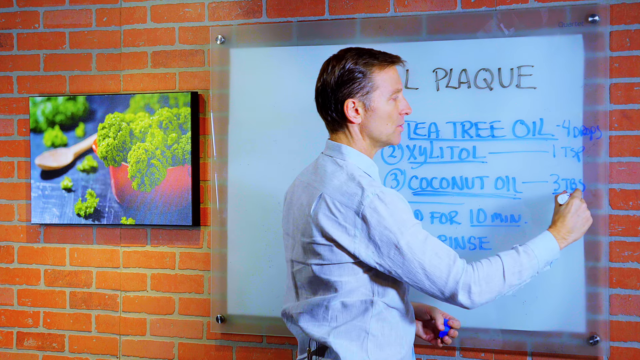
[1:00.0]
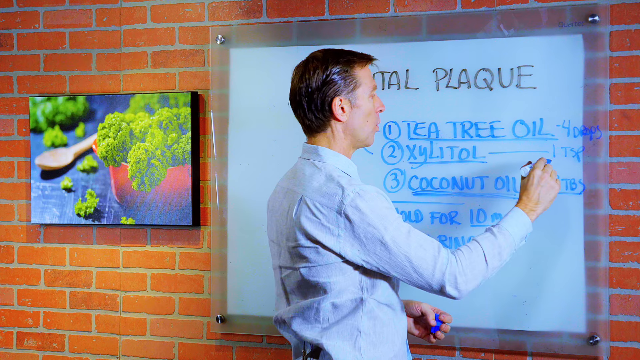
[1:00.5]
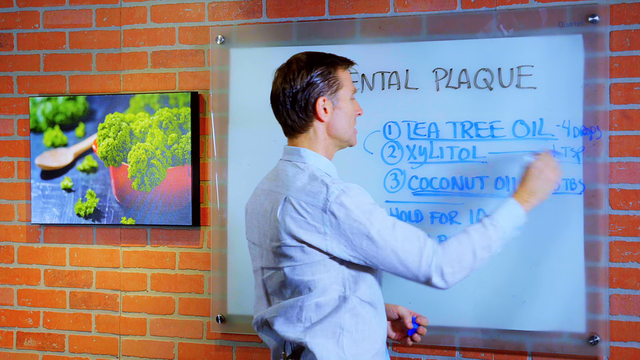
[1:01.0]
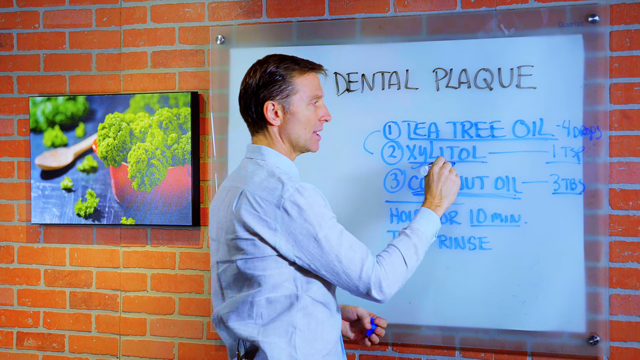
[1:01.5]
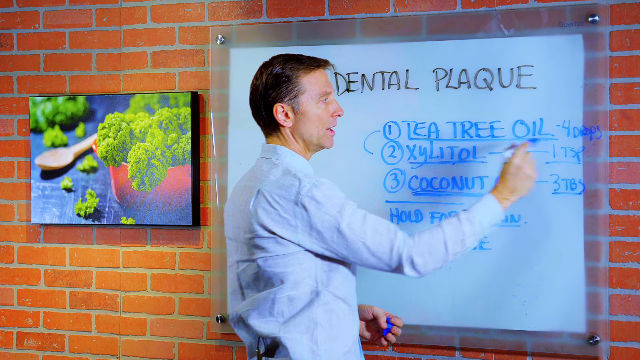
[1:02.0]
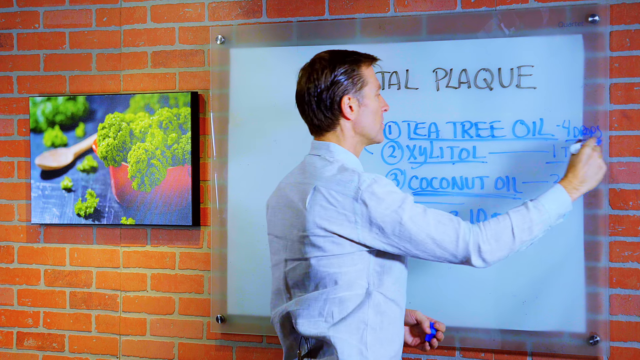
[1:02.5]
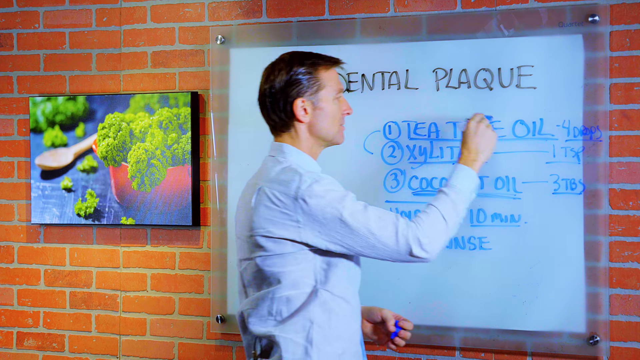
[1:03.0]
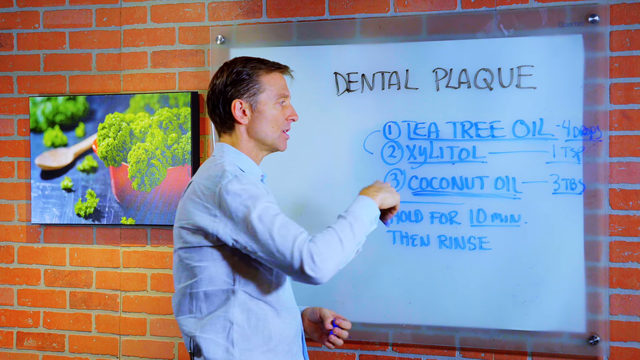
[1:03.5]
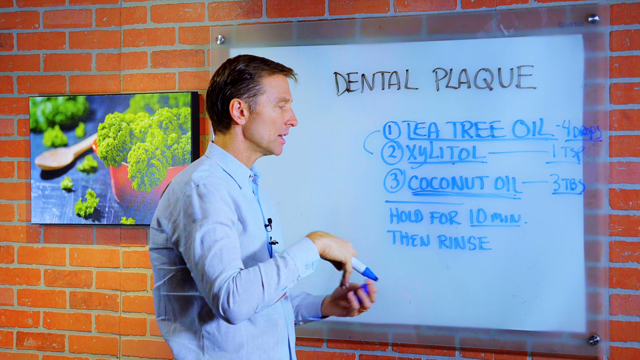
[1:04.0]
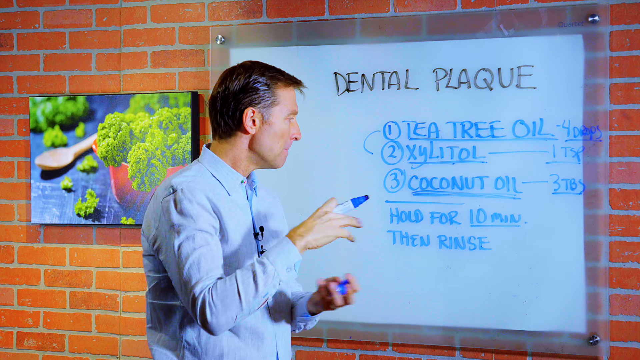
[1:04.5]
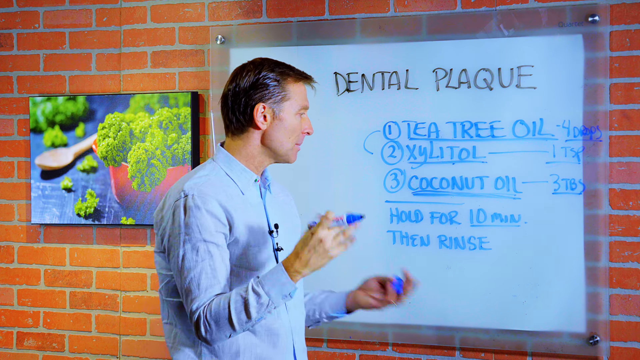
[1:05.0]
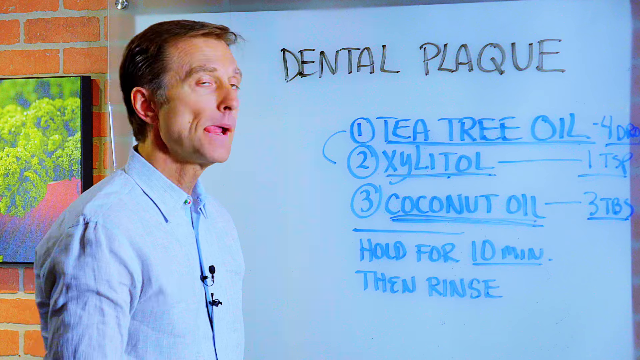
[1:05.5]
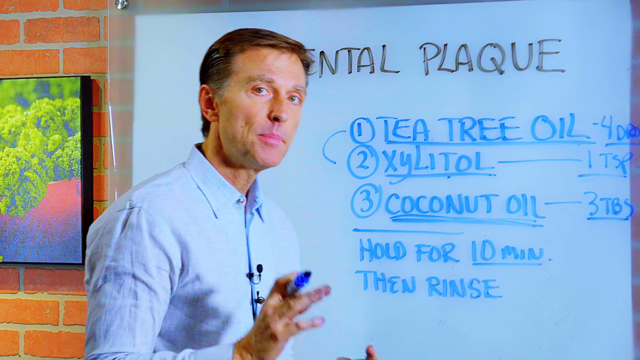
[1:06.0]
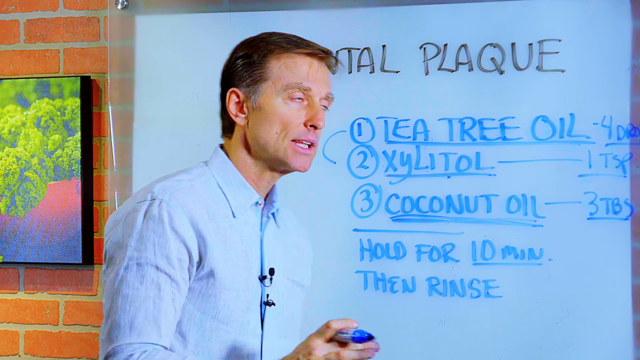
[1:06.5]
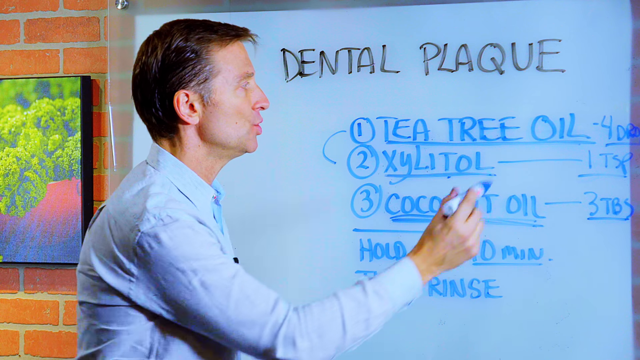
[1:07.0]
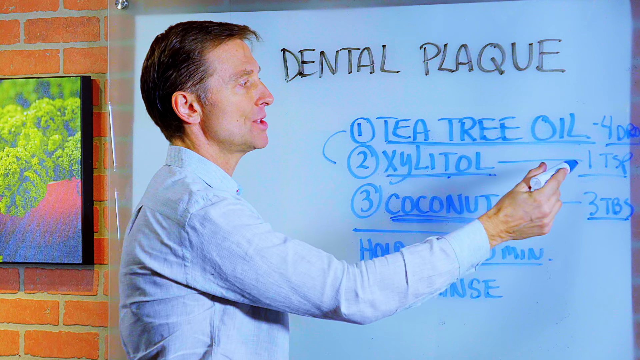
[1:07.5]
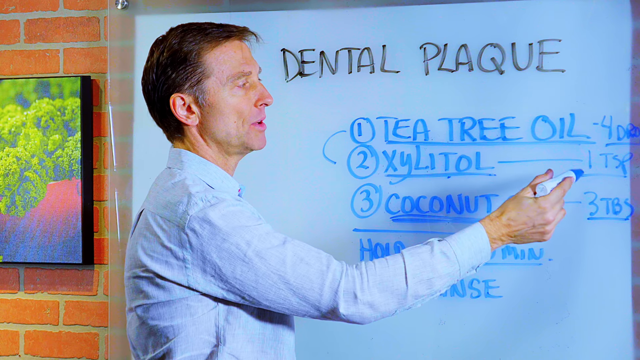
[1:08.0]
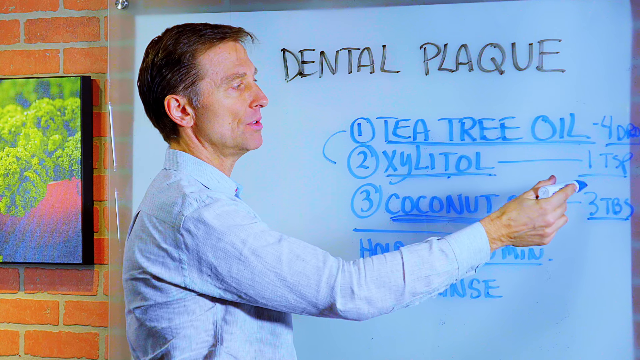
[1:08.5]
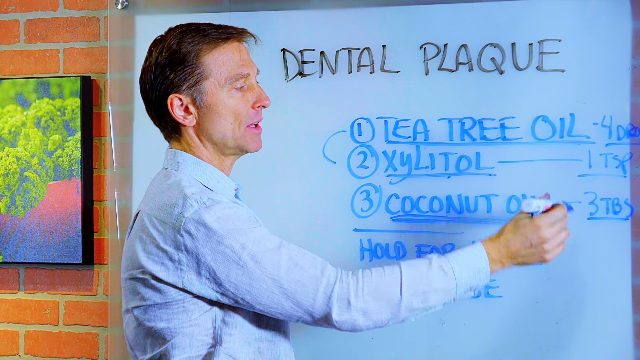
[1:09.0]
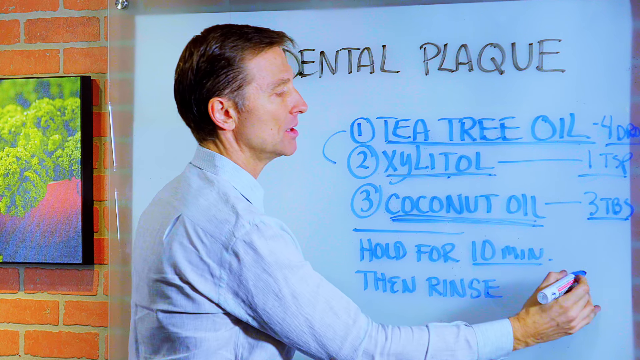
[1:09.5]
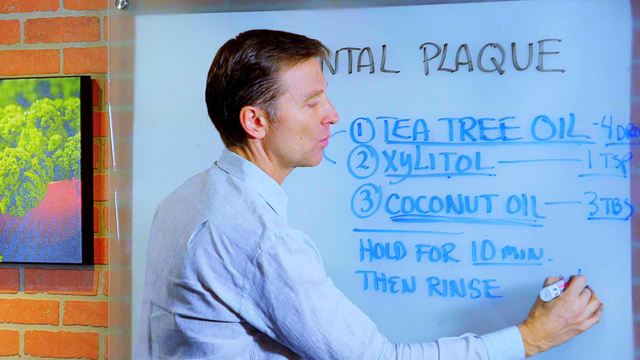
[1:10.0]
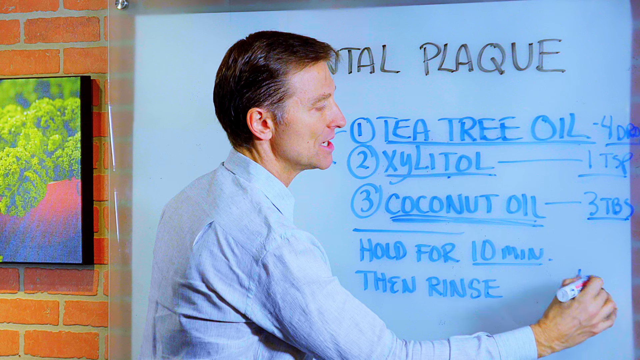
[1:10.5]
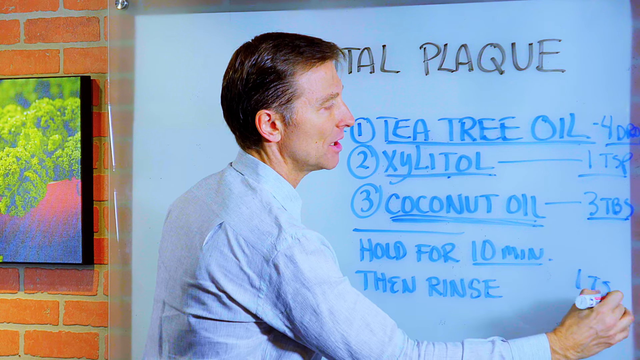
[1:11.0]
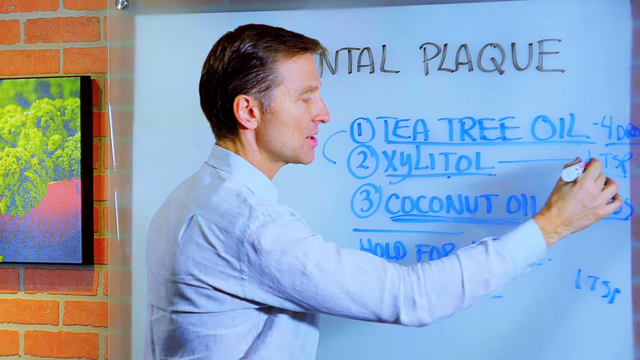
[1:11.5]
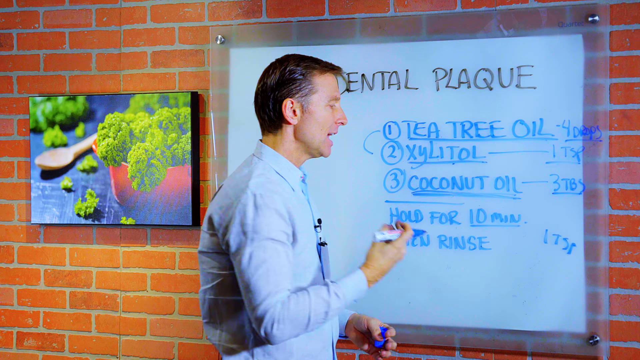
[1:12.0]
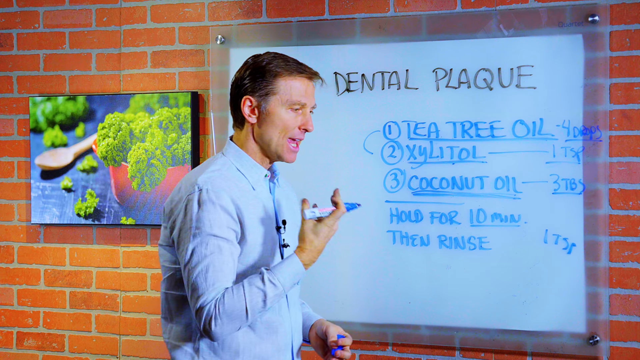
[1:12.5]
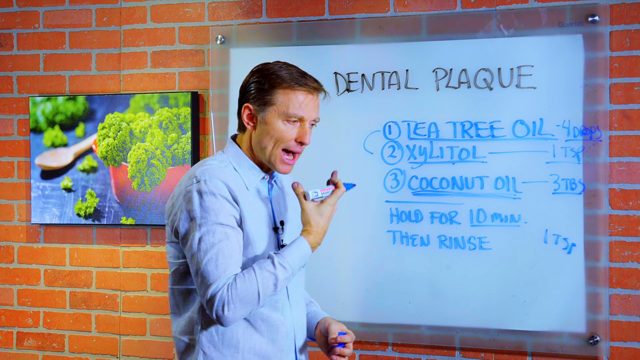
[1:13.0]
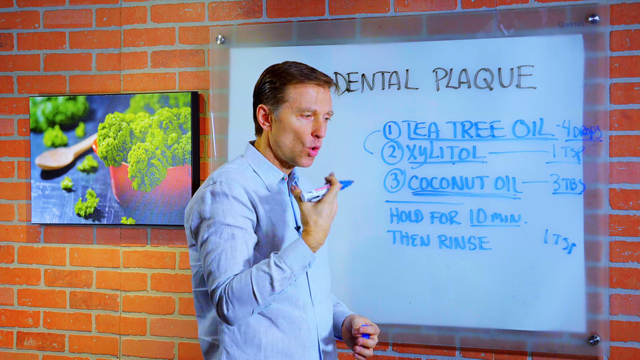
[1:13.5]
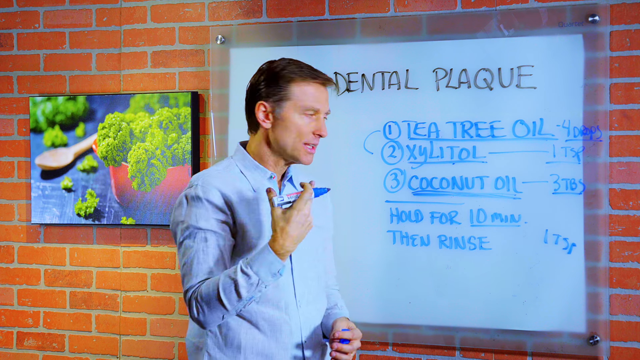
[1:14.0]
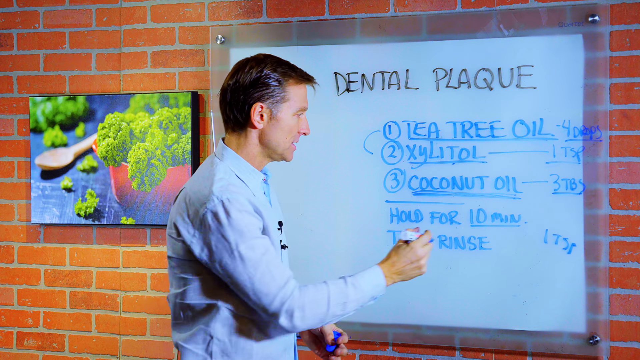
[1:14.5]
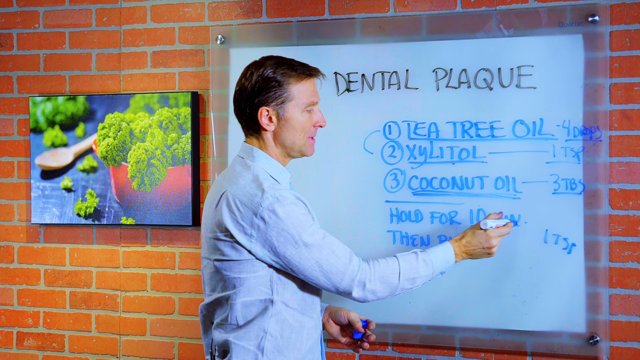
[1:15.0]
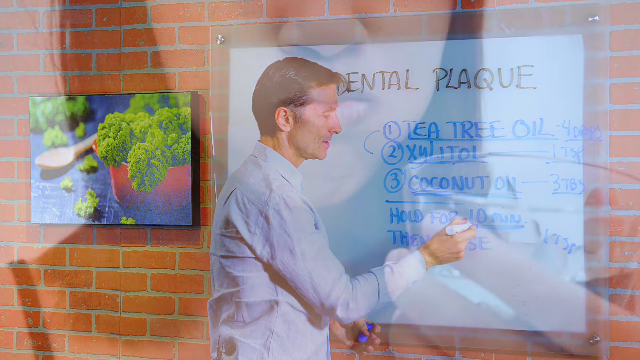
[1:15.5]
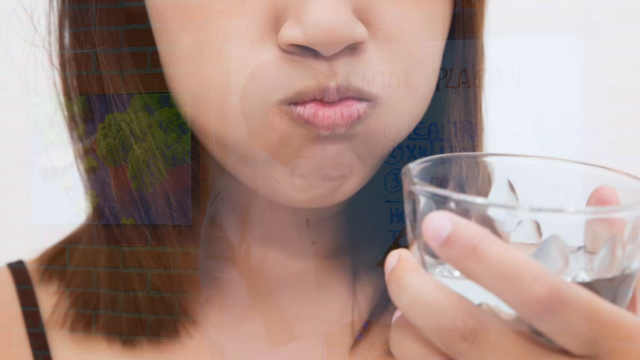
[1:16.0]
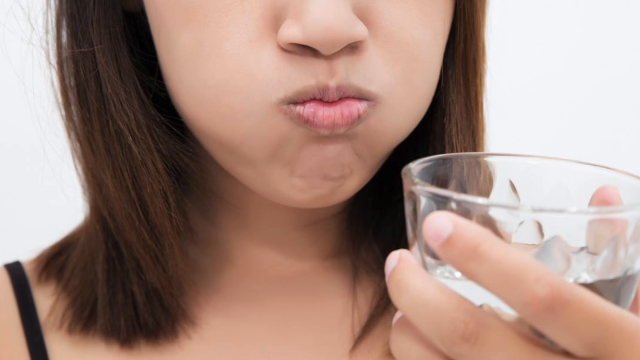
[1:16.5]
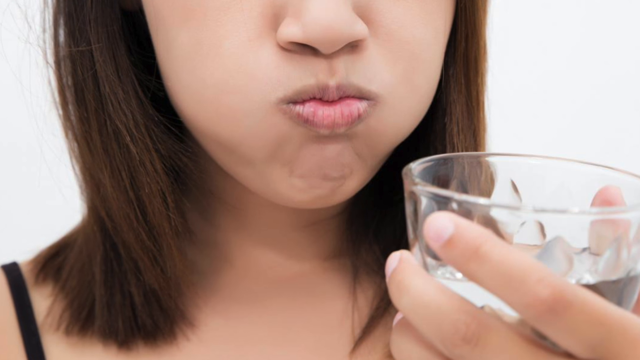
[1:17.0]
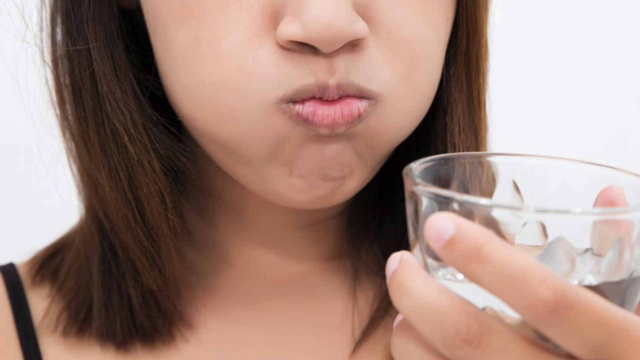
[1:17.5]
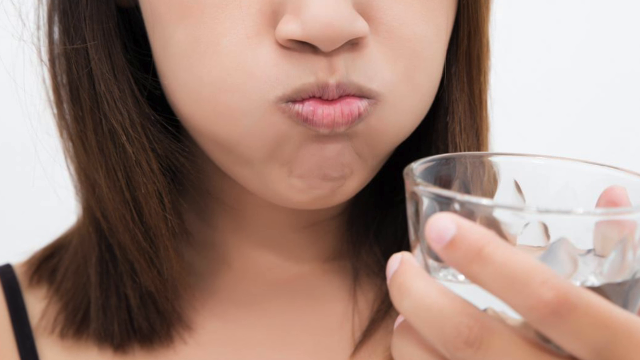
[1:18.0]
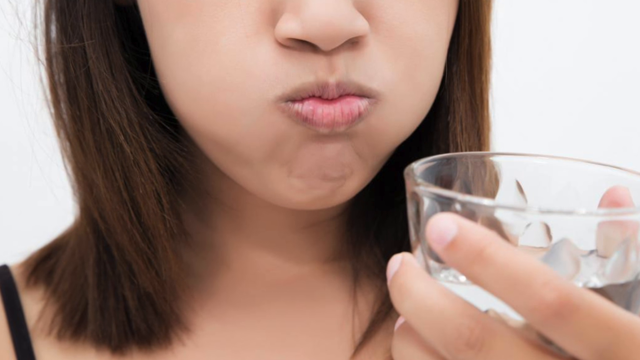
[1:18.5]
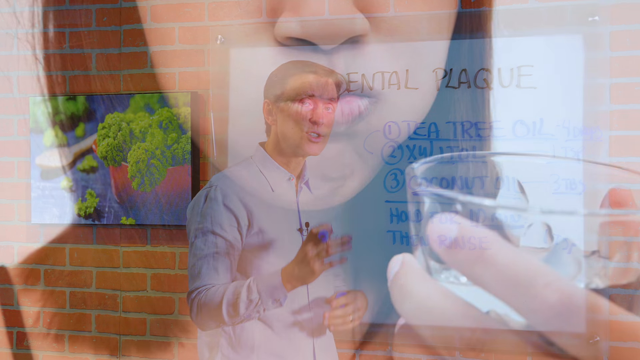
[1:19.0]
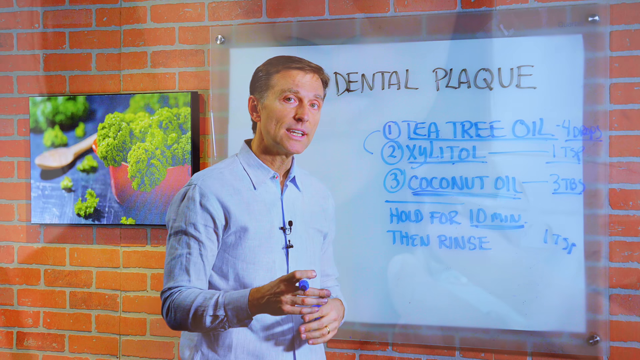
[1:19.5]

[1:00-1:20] The man brings his right hand with the pen under the second ingredient, xylitol, then moves to the first line, tea tree oil, and underlines "four drops." He twirls his right and left hands over each other. A tighter shot shows the man is Caucasian, with sandy brown hair swept to the side to his right. He turns toward the camera, then looks back at the wall board with his pen on the tea tree oil line. He points the pen to another line, then moves down to a blank spot on the board to the right of "hold for 10 minutes, and then rinse" and writes "one teaspoon." He pulls his right hand away and sort of circles it in front of his mouth, several inches away, then returns the pen to the board. The next image is a cropped photo of apparently an Asian woman with brownish-black hair, framed from the top of her nose to the base of her neck at the top of her chest. Her mouth is closed in a pucker, and she holds a glass of water or liquid in her left hand.